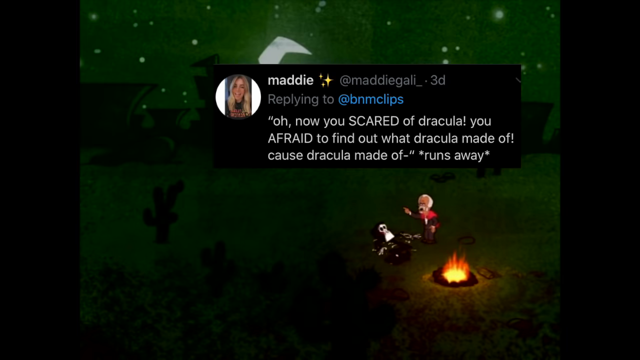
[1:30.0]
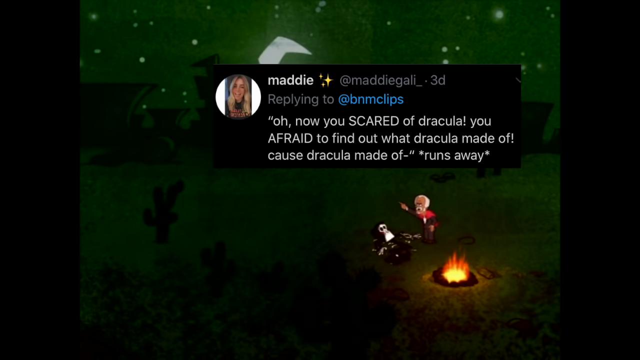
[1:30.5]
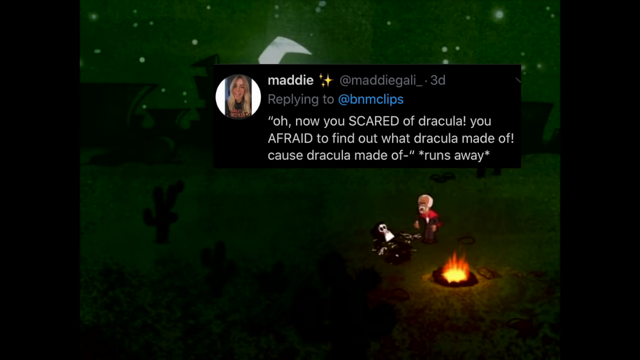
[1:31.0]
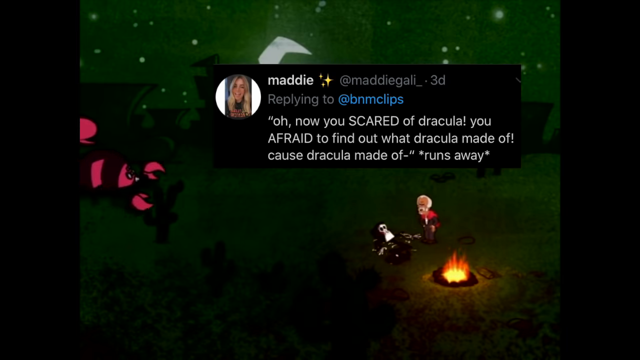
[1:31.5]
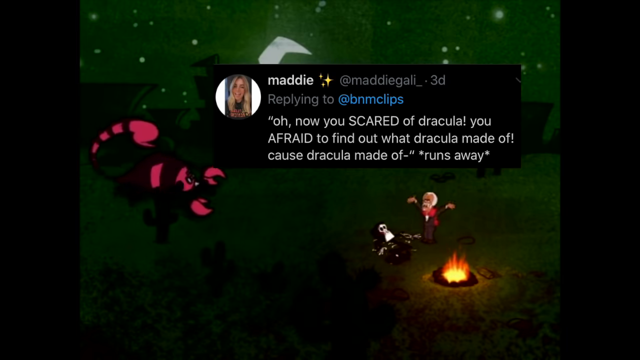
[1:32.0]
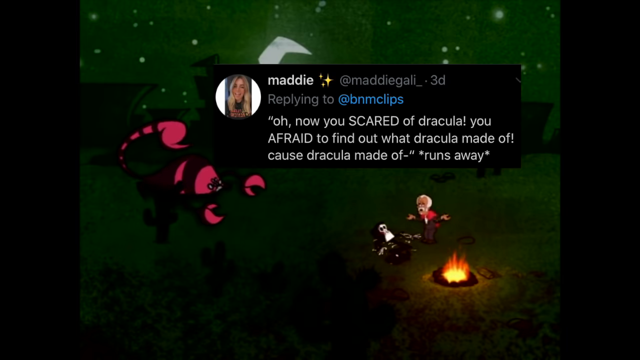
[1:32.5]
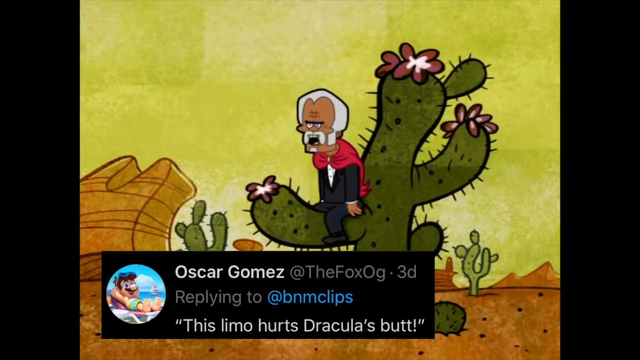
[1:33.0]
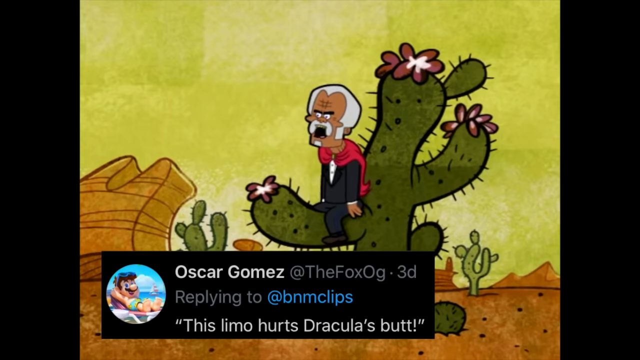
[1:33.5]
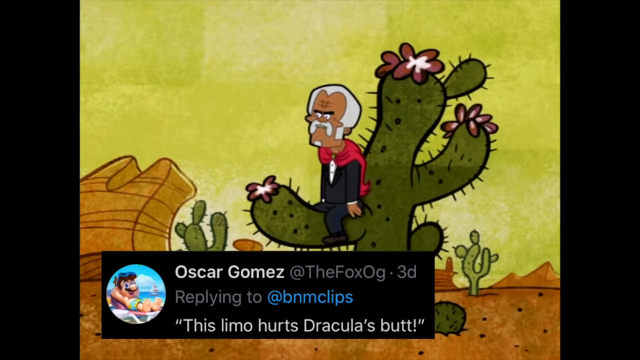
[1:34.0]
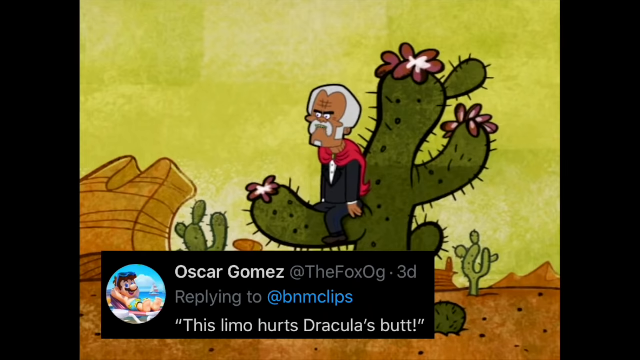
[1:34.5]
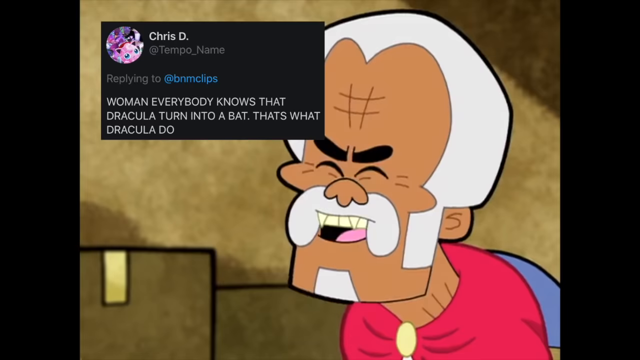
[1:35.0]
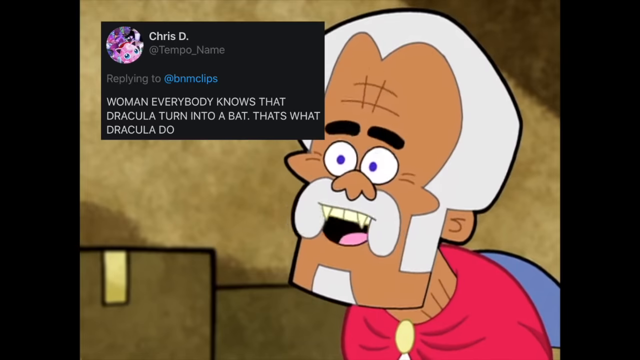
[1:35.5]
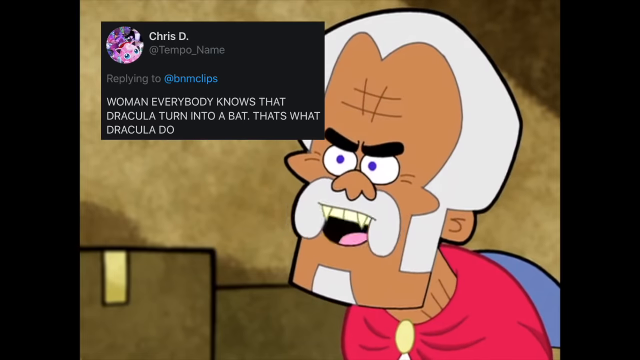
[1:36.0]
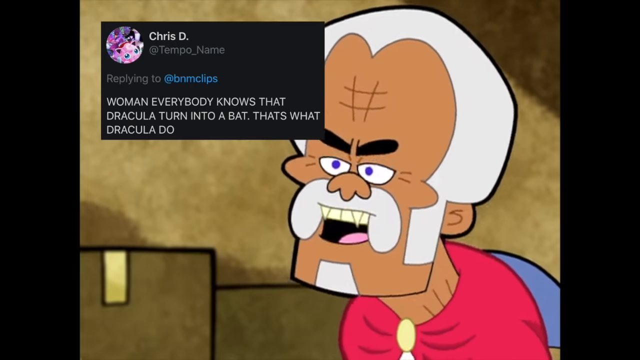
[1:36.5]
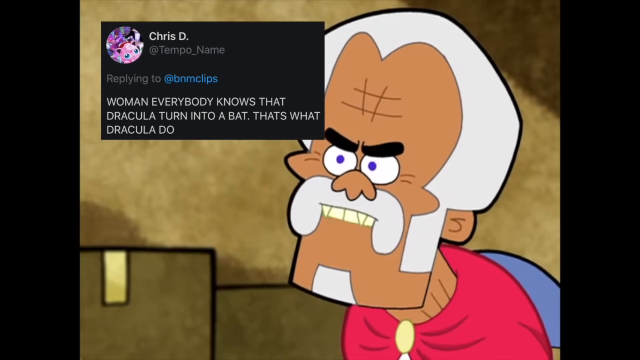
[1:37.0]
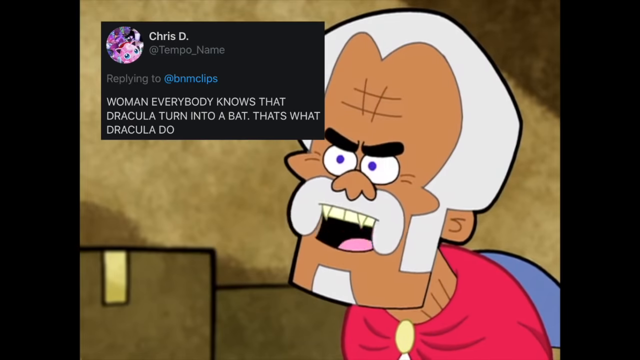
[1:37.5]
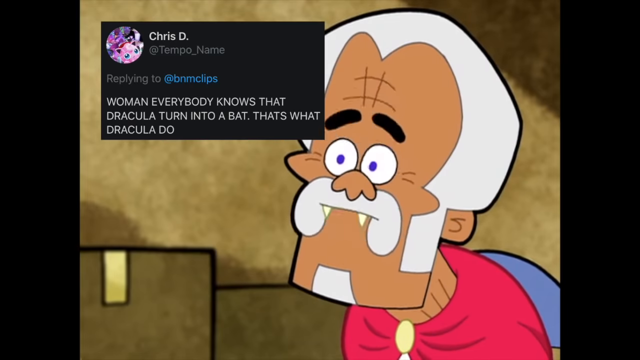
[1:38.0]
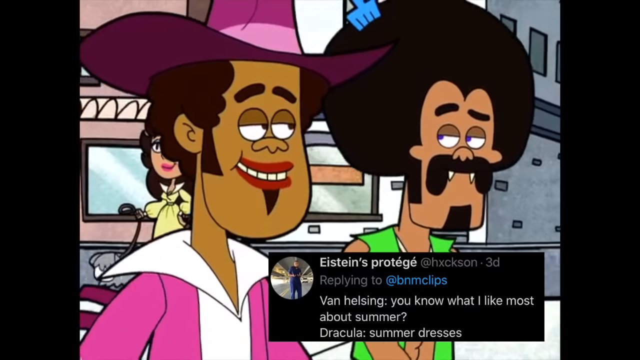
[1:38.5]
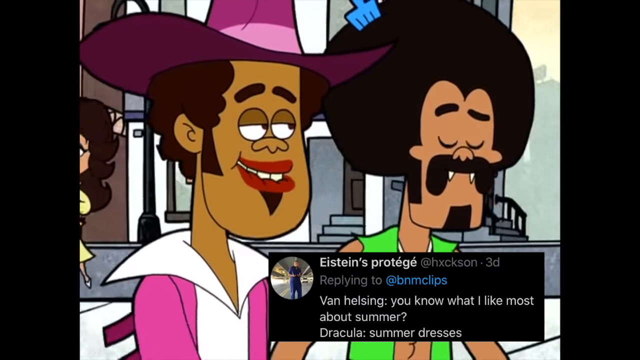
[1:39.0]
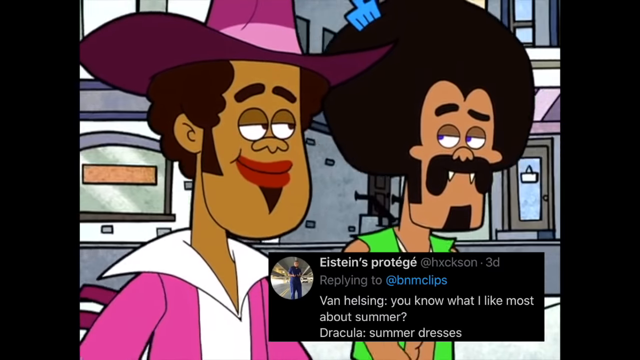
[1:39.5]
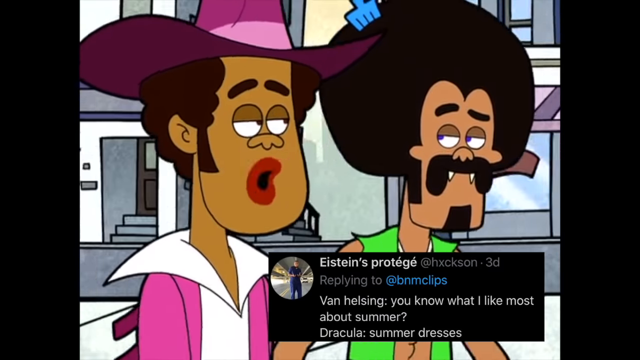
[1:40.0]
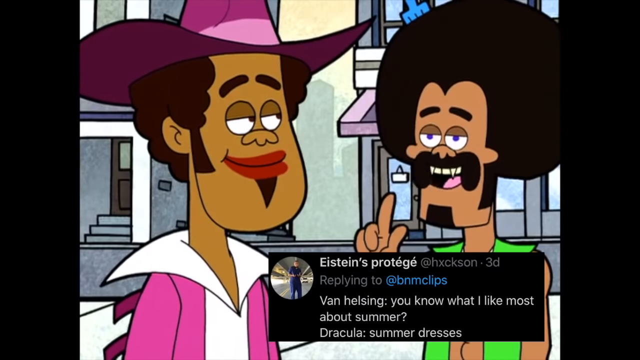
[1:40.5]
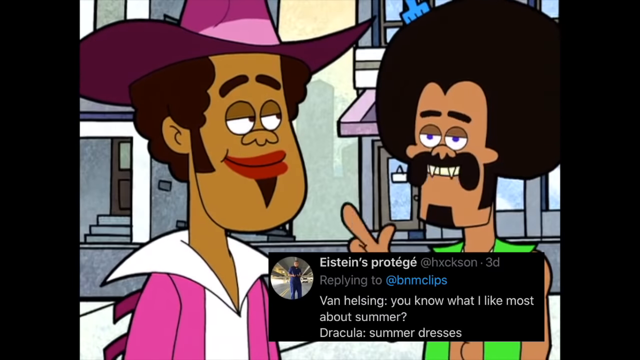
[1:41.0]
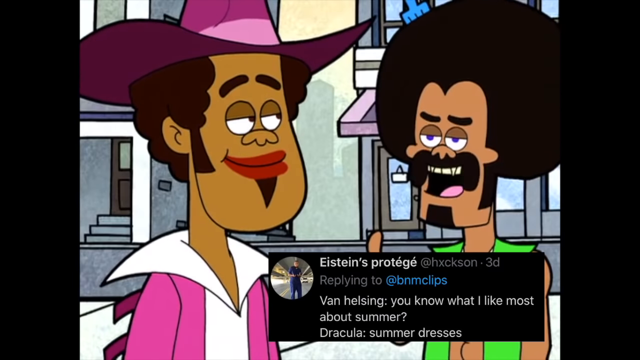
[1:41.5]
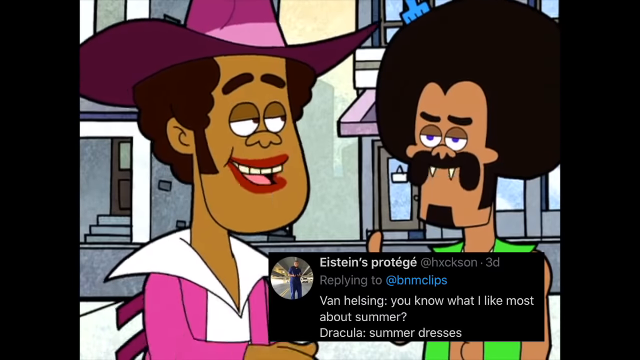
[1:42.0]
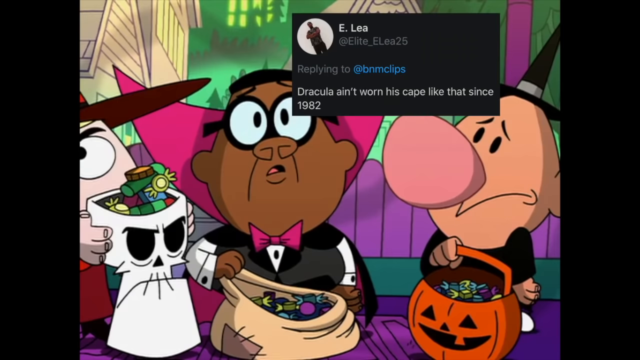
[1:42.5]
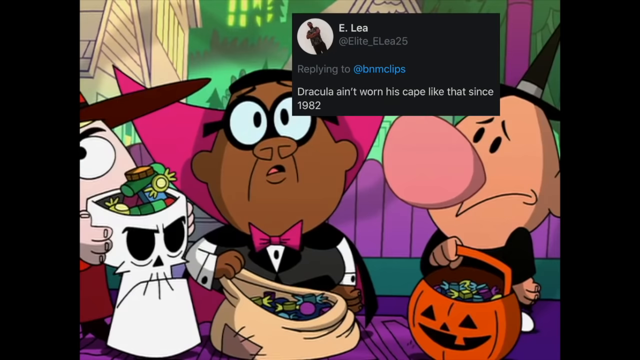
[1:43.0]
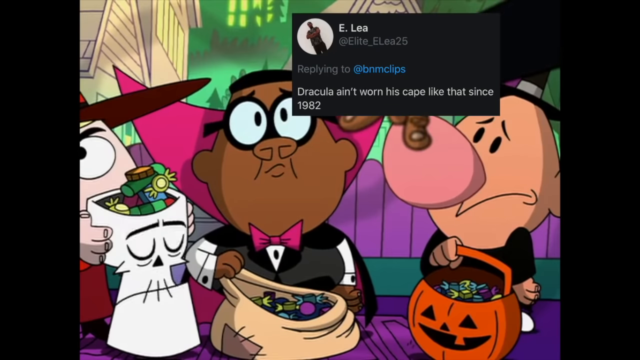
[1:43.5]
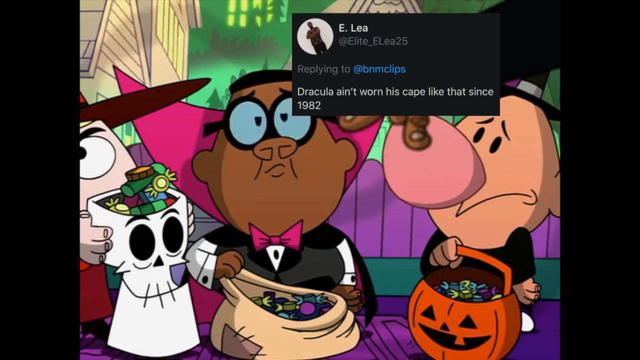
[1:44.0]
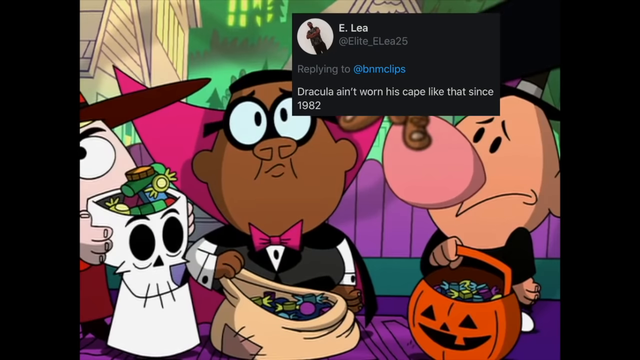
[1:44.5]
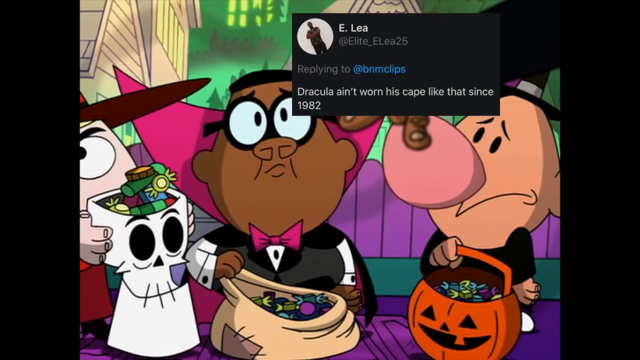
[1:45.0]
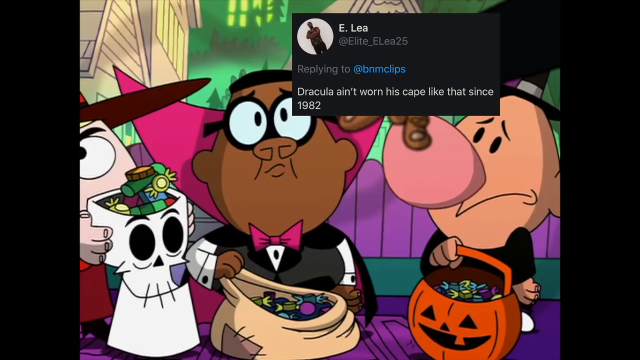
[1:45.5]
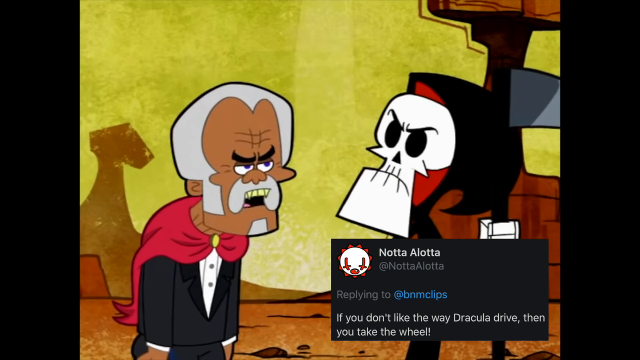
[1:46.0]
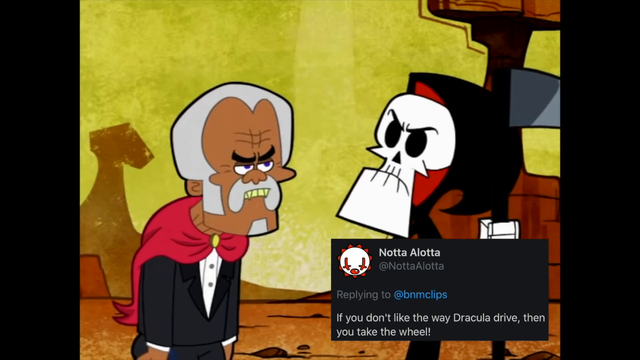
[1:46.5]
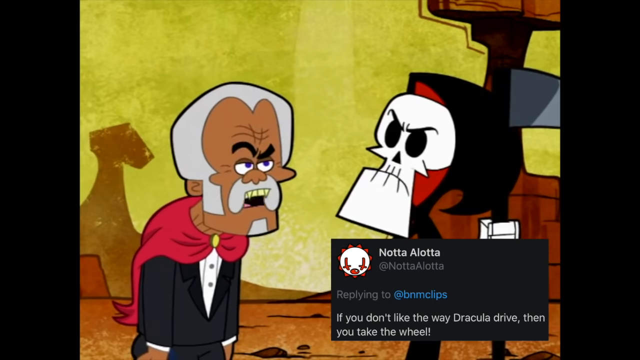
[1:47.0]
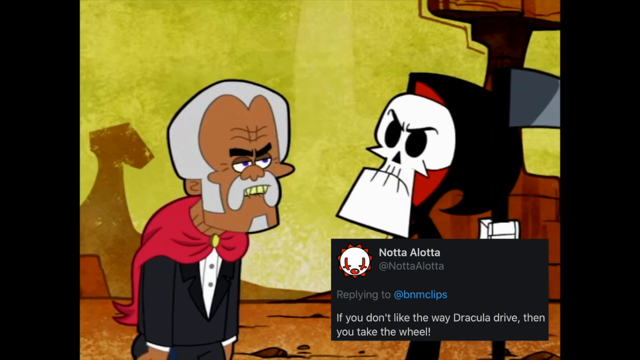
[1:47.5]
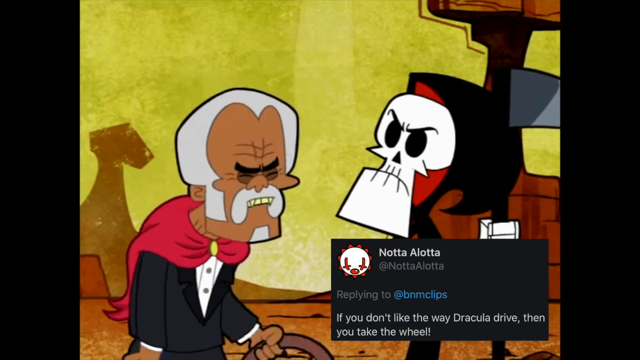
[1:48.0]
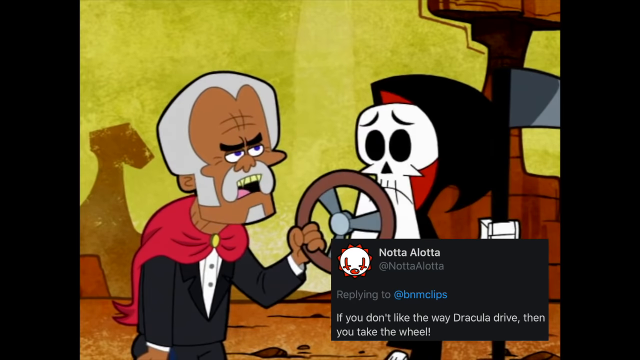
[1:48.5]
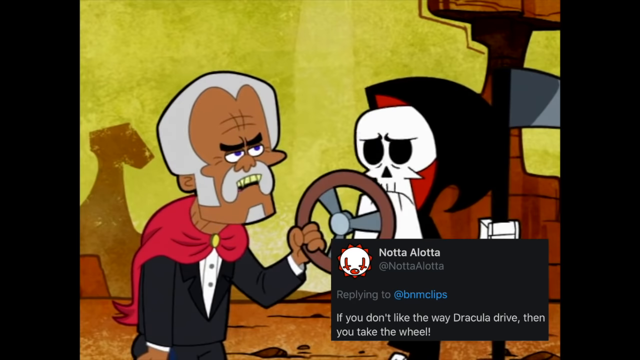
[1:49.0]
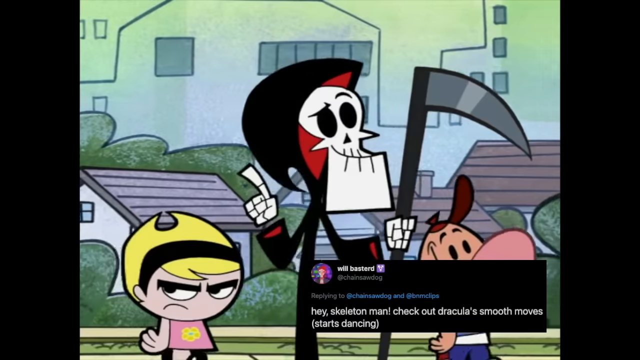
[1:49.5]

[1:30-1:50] Dracula and Death are out at the campfire. Dracula stands up and points over at the moon while talking. Death lies there, seemingly drunk and just about to pass out; he falls back on the ground with a full belly. A large scorpion then comes walking up in the background. The scene switches to two African-American vampires walking down the street, both eating fudgesicles and talking. The scene changes once more, and Dracula talks to Death.